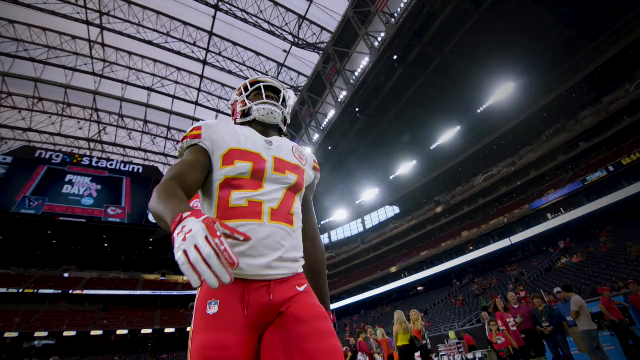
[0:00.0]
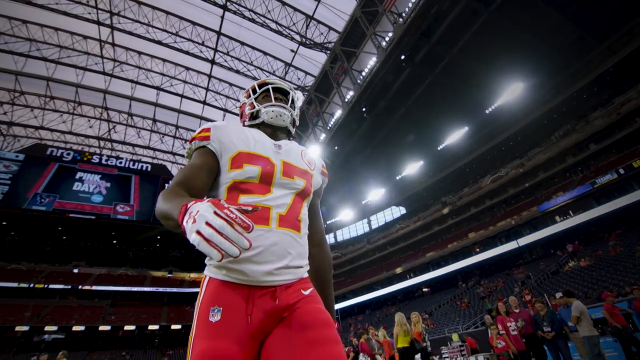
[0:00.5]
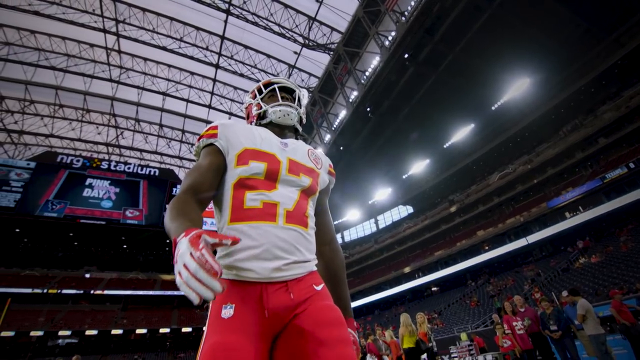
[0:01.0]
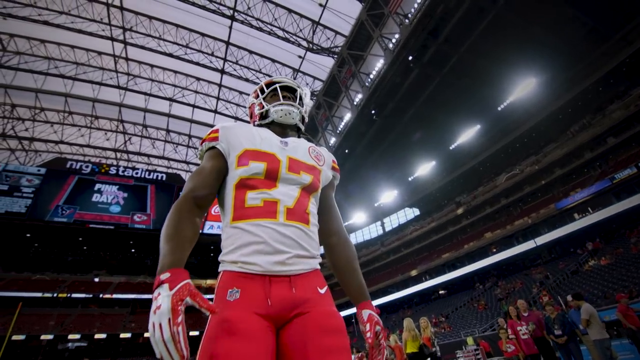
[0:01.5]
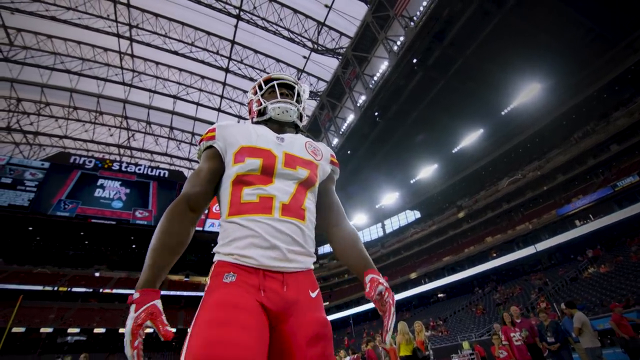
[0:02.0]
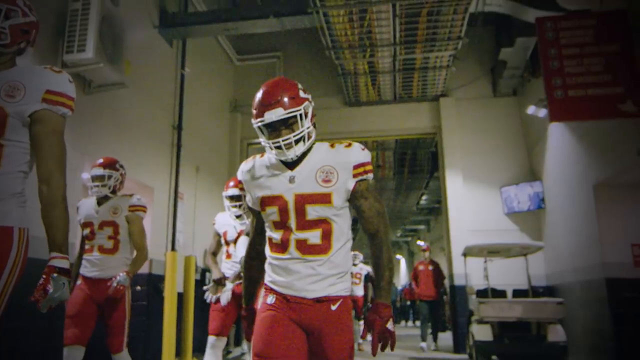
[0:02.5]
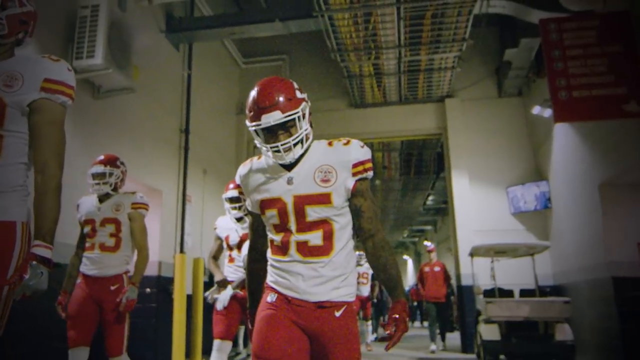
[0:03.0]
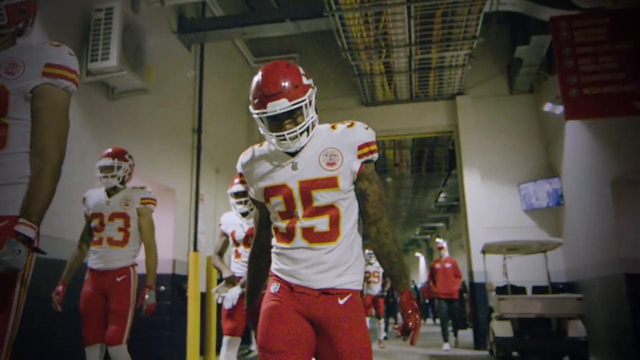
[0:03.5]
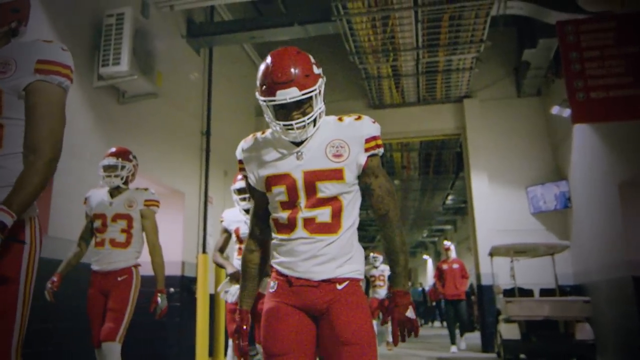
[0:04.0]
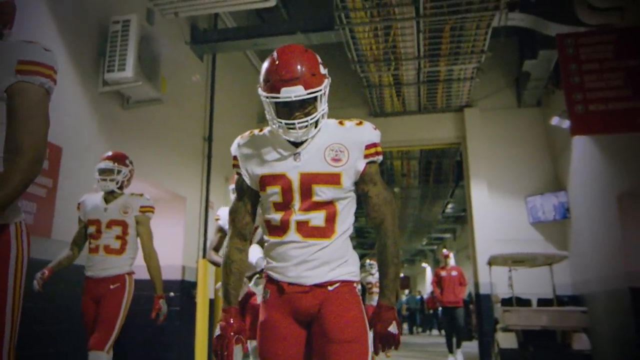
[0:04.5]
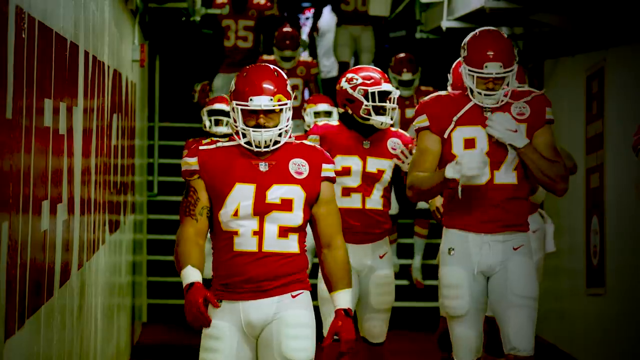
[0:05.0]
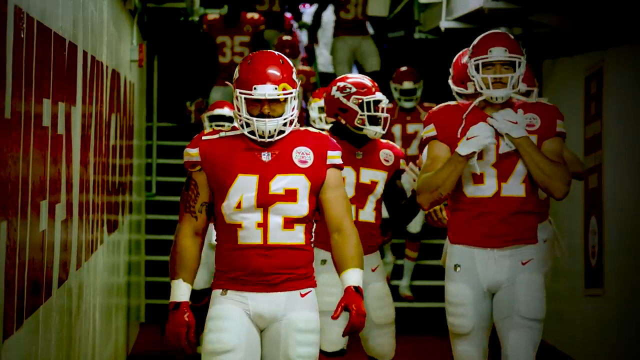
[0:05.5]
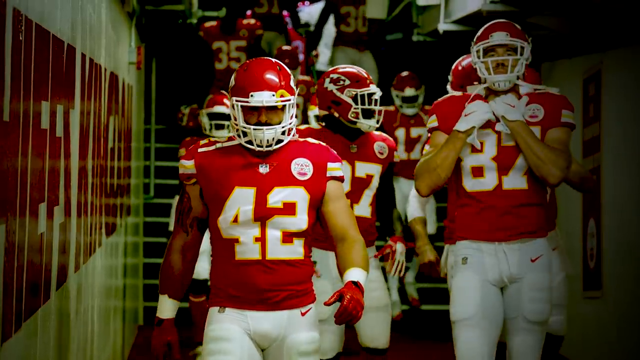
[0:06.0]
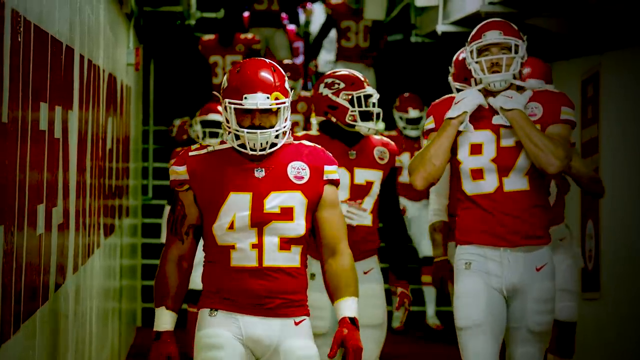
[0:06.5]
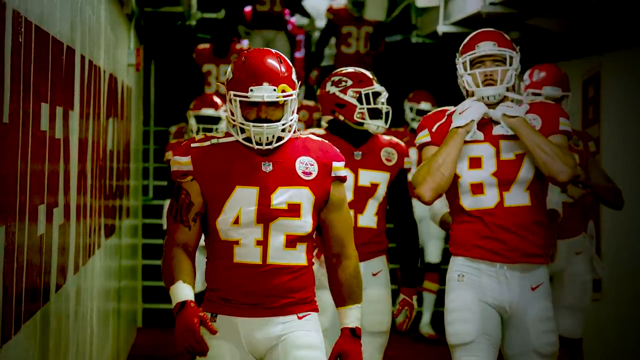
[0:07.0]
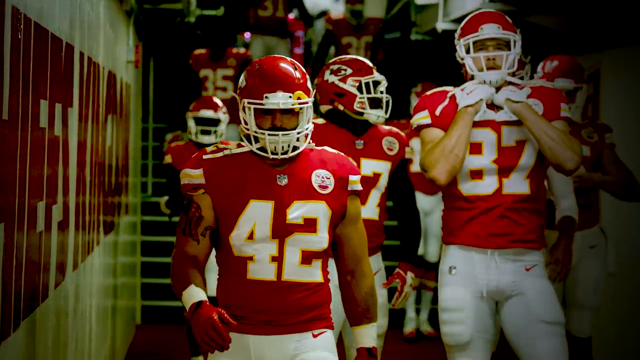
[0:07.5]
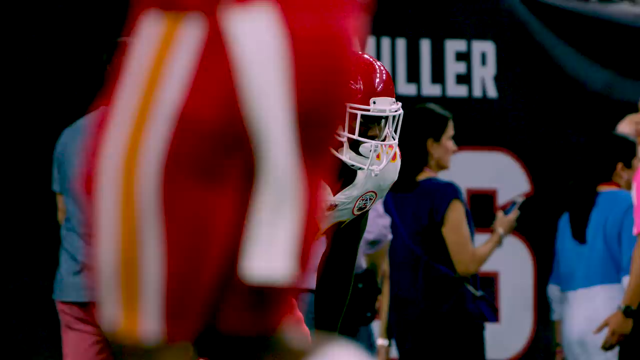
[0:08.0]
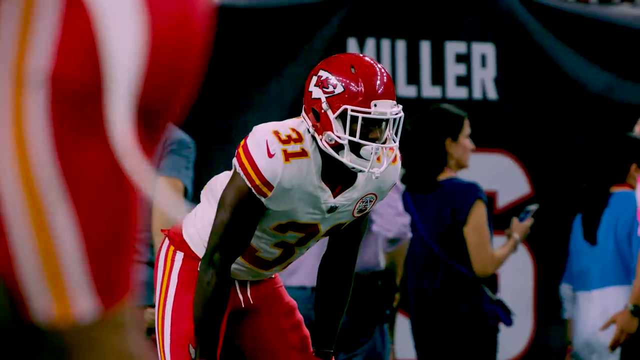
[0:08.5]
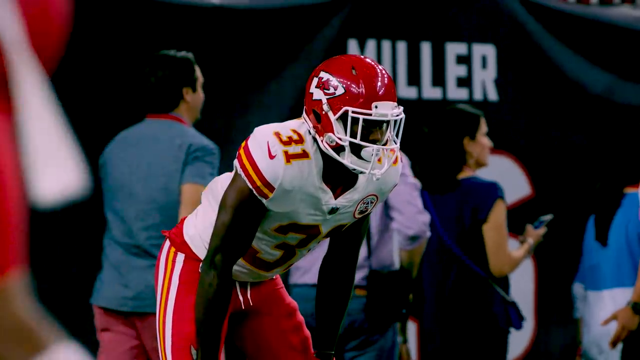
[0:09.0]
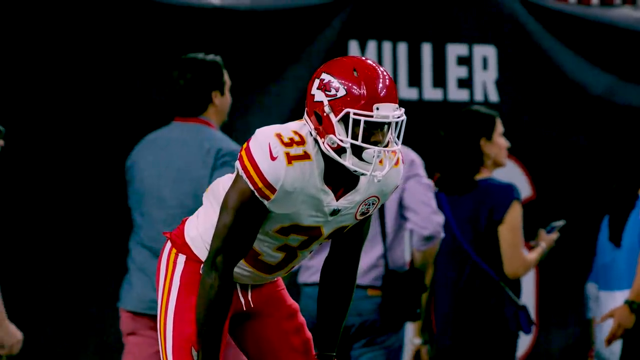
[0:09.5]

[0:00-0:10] A football player in full uniform walks, wearing a helmet and a white jersey with the number 27 on the front. His right arm is slightly in front of him as he walks, and his left arm is visible only up to the wrist, slightly behind him. He has red bottoms on. A notice in the background on his left-hand side indicates the NRG stadium. The video moves to the tunnel, where his teammates slowly walk out, followed by the opposition team. At the end, an individual crouches over, waiting for play to start; he wears 31 on his right shoulder. The red track pants have three stripes down the side, white, yellow and white. Other people are visible in the background of this final image.